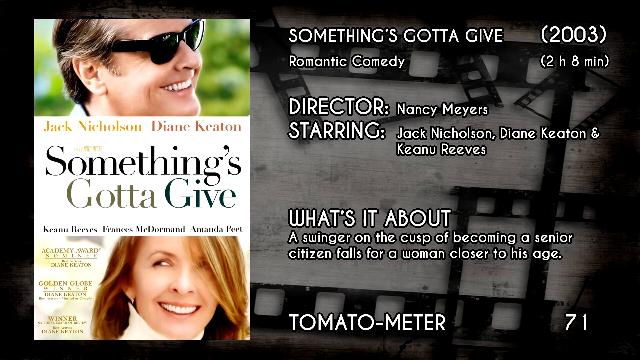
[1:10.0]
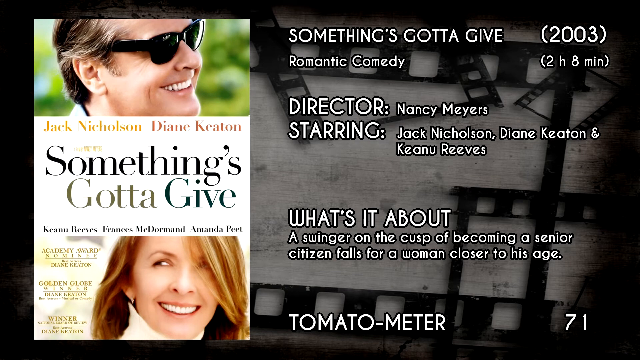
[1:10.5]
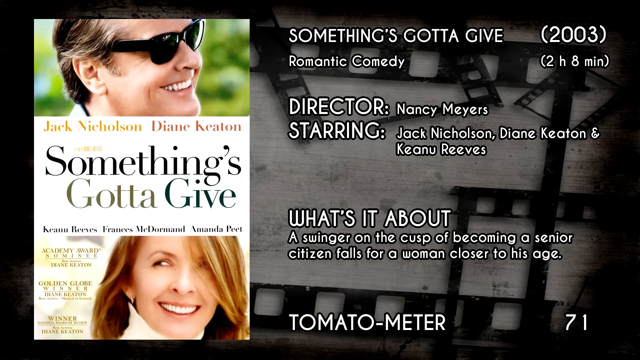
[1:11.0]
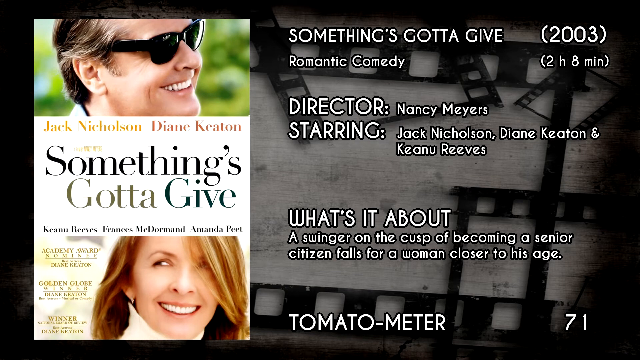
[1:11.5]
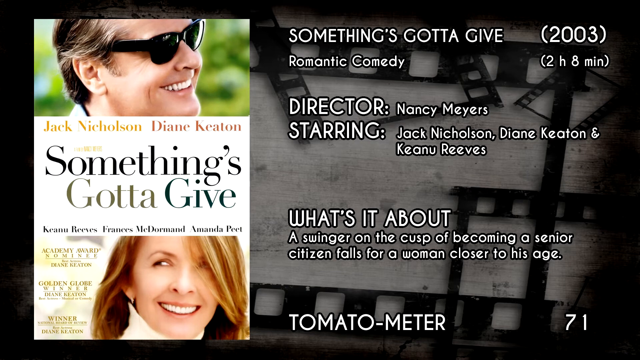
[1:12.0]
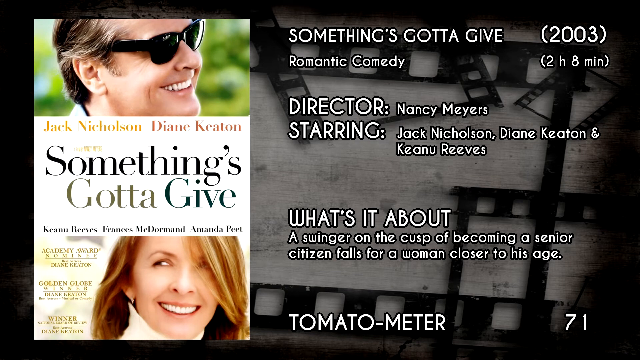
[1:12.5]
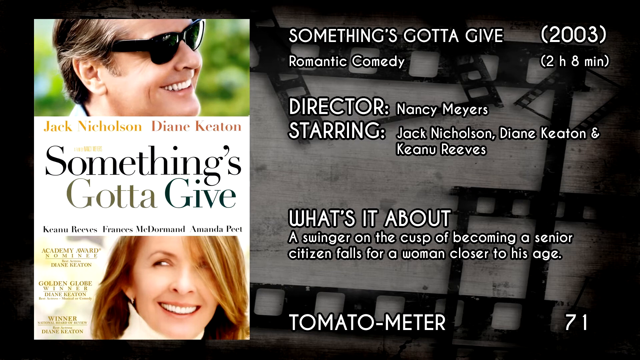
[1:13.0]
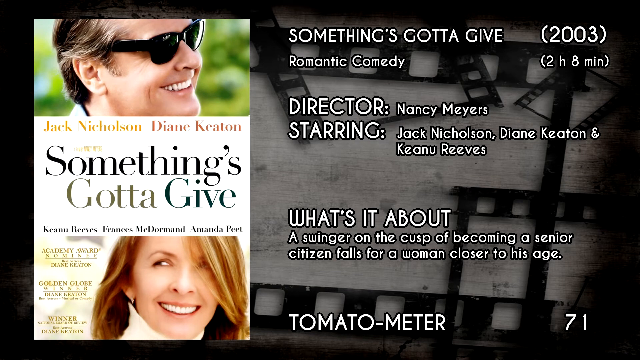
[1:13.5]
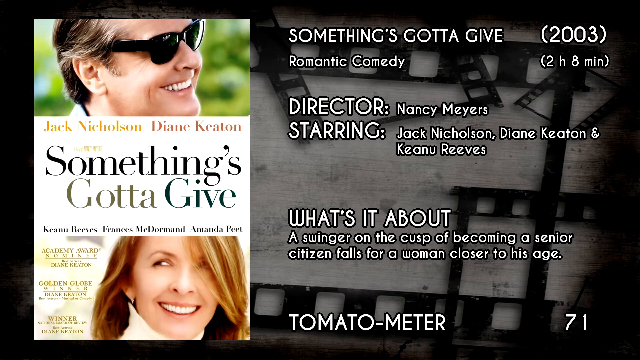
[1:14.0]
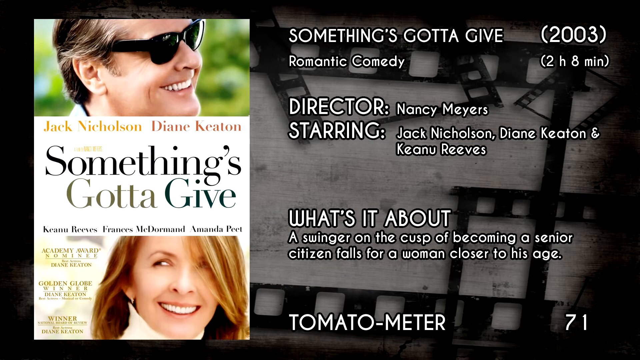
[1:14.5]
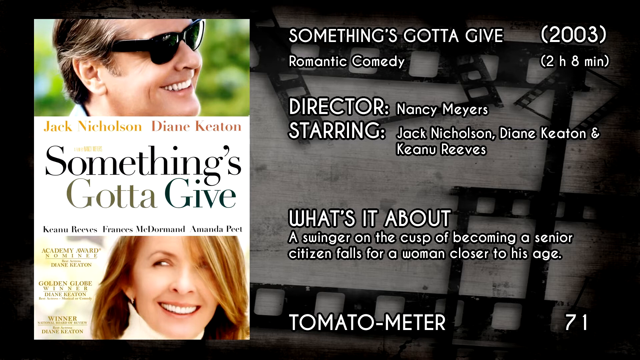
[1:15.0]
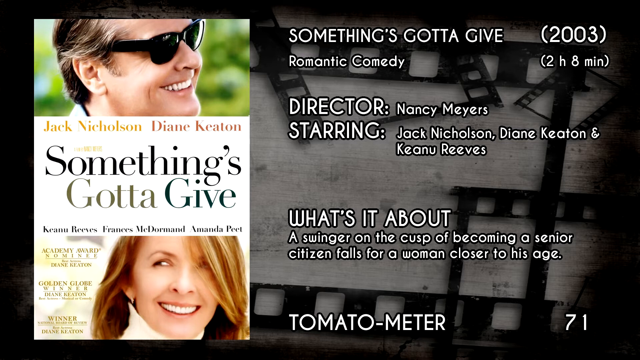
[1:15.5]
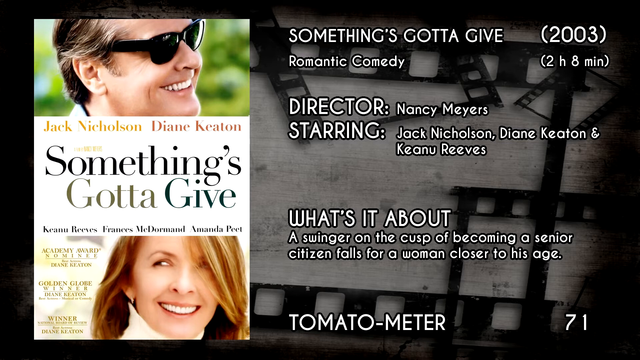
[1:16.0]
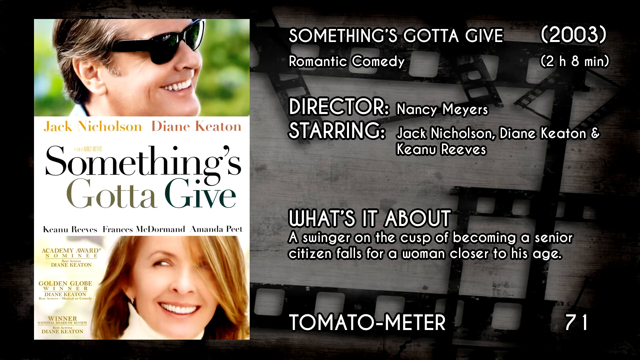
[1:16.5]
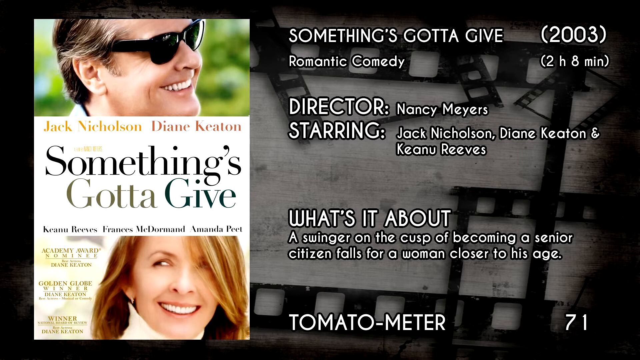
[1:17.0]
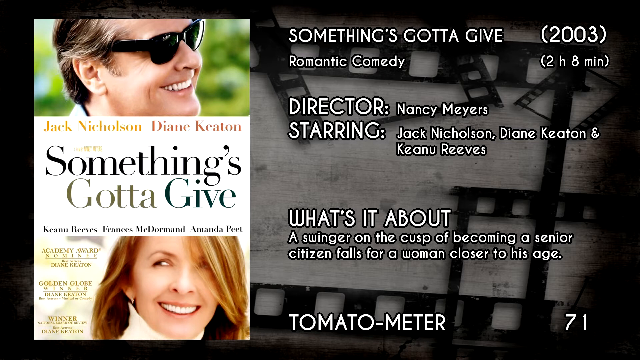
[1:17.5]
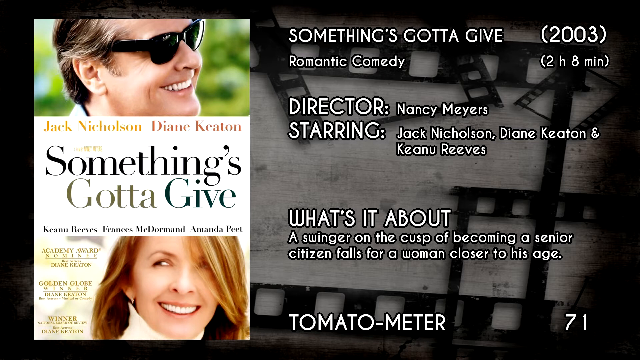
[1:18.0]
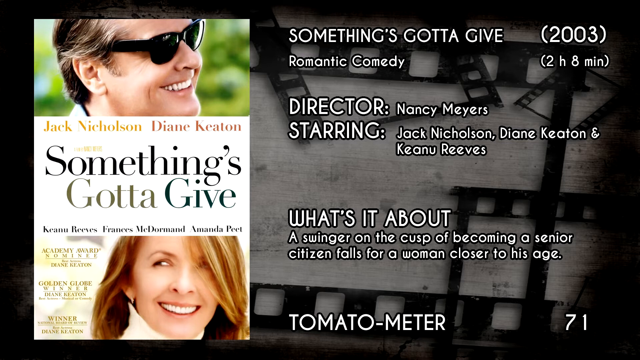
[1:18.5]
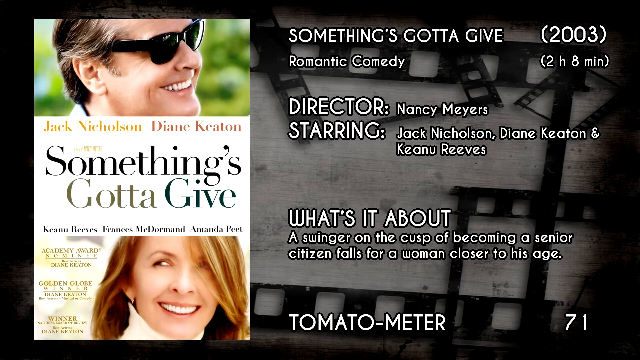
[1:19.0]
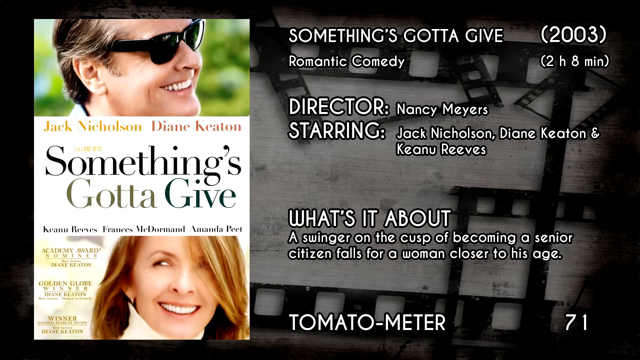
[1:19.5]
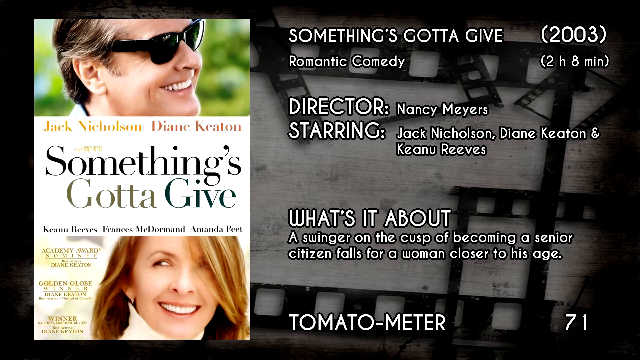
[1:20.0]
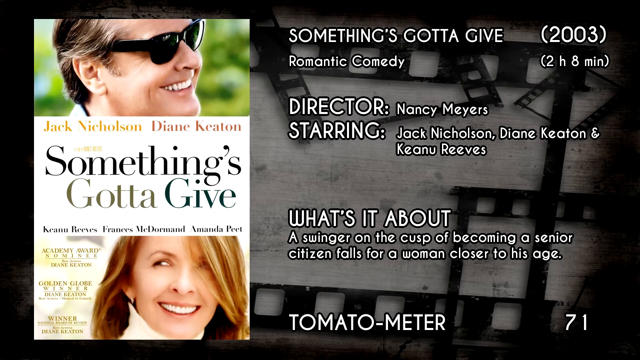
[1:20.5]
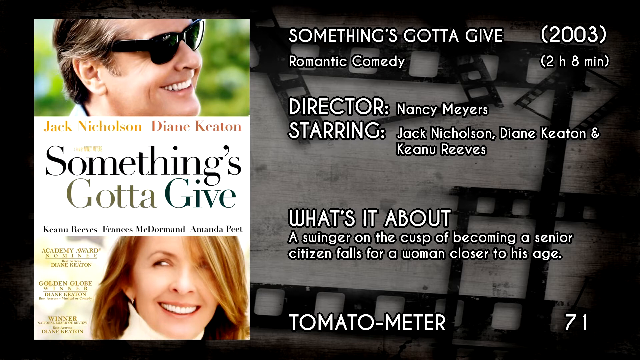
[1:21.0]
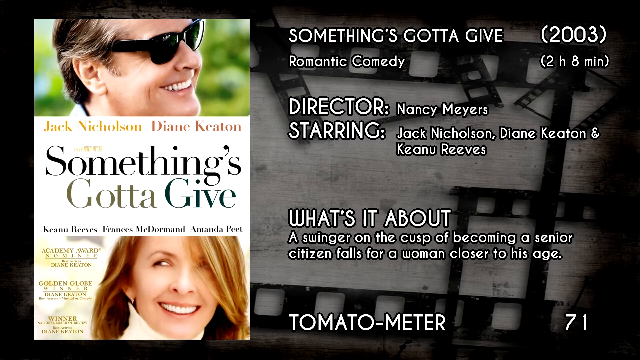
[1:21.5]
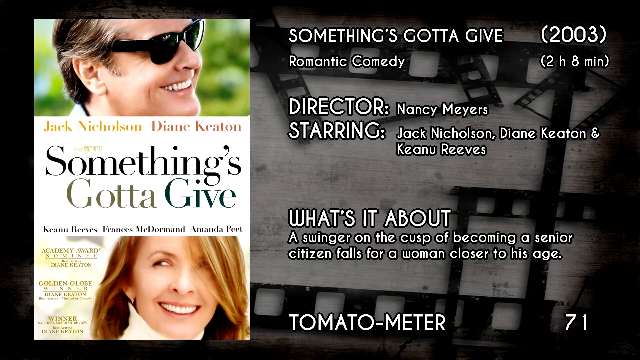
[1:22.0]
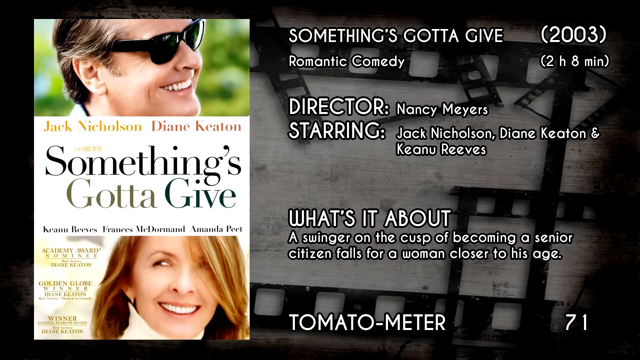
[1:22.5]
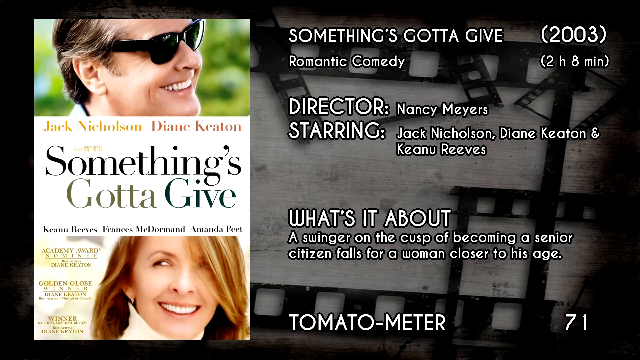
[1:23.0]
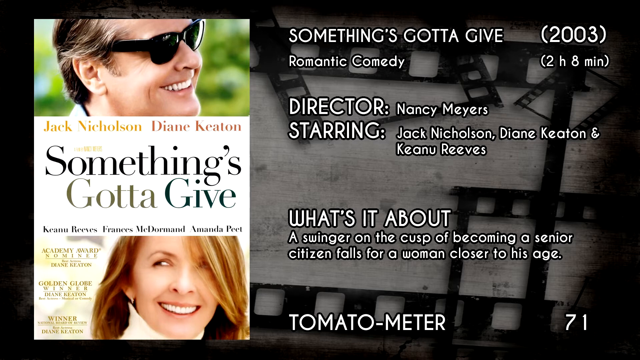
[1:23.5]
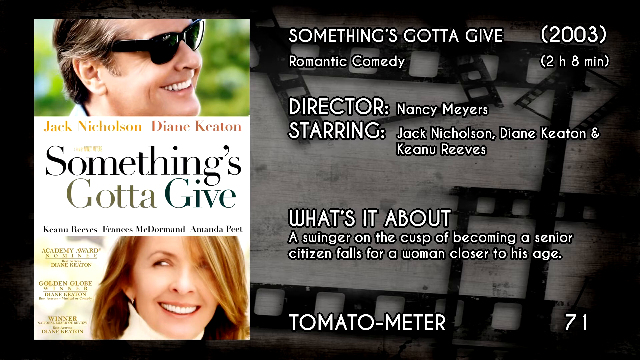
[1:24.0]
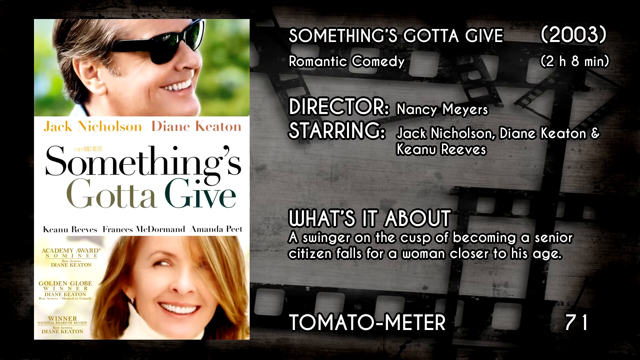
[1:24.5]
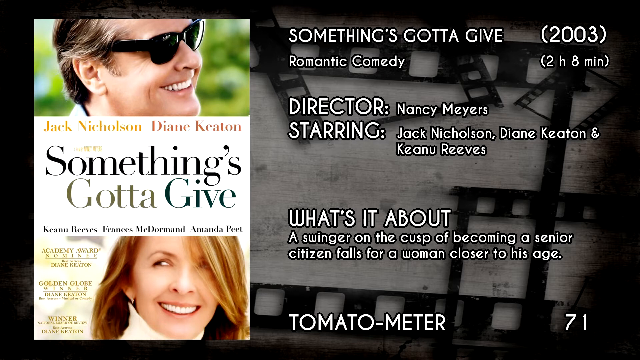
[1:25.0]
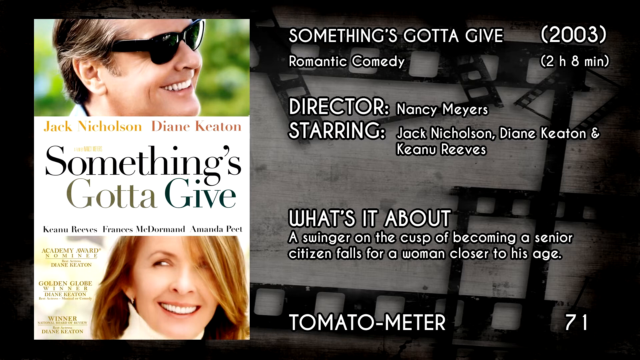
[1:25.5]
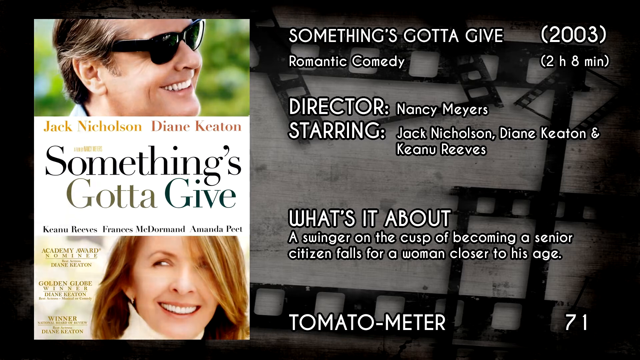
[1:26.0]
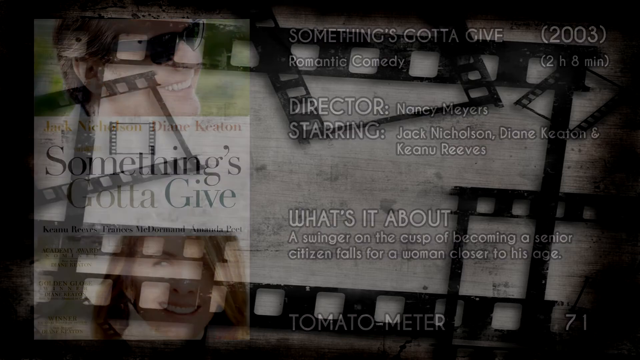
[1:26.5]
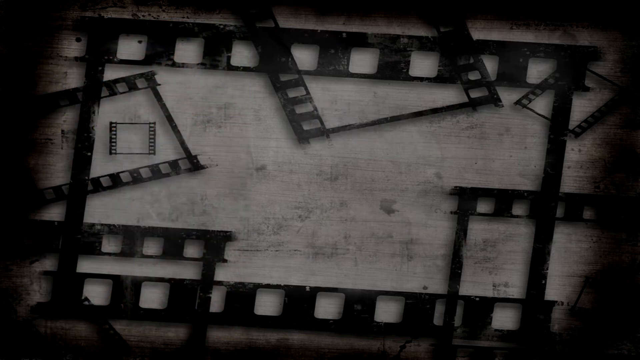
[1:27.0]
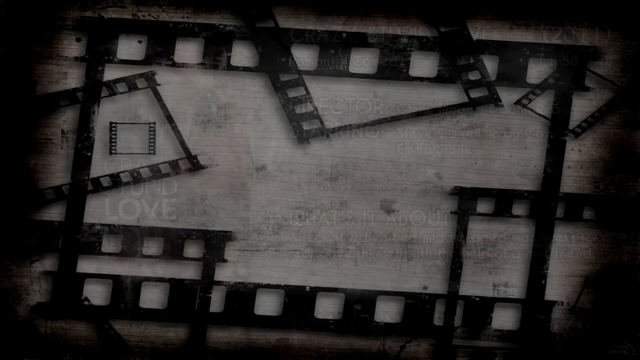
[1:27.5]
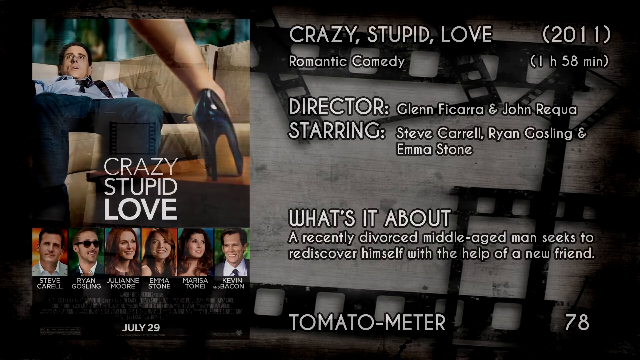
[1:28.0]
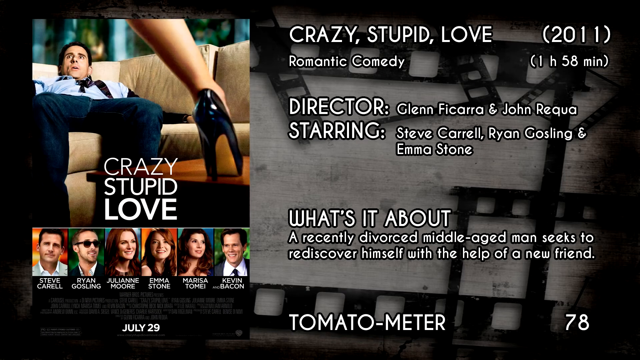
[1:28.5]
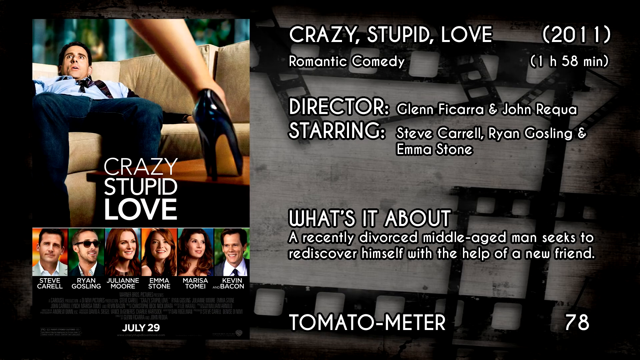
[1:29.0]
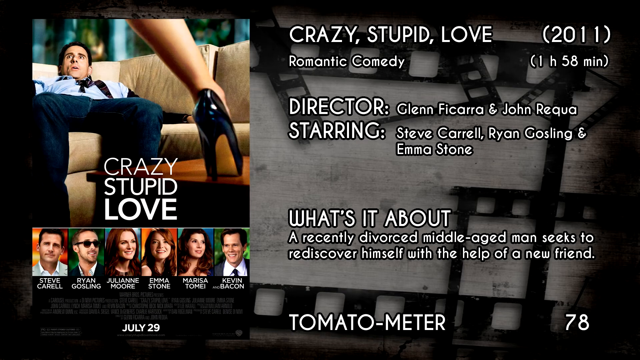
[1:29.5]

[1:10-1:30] The film Something Gotta Give is shown: directed by Nancy Meyers, starring Jack Nicholson, Diane Keaton and Keanu Reeves, from 2003, a romantic comedy 2 hours and 8 minutes long. Its summary: a swinger on the cusp of becoming a senior citizen falls for a woman closer to his age. Next comes Crazy Stupid Love, from 2011, by directors Glenn Ficarra and John Requa.